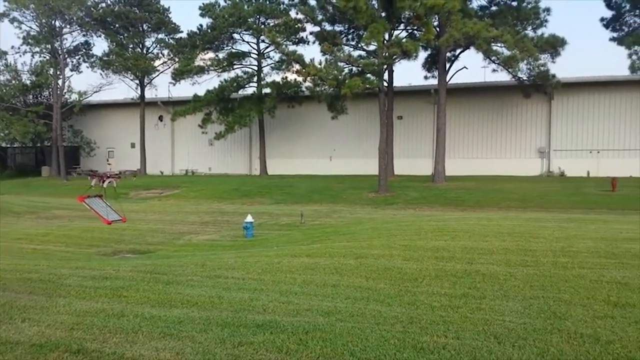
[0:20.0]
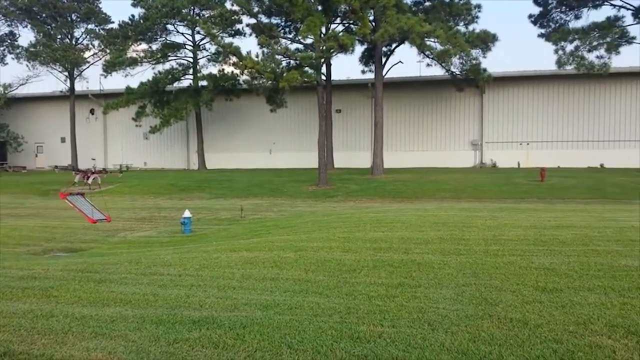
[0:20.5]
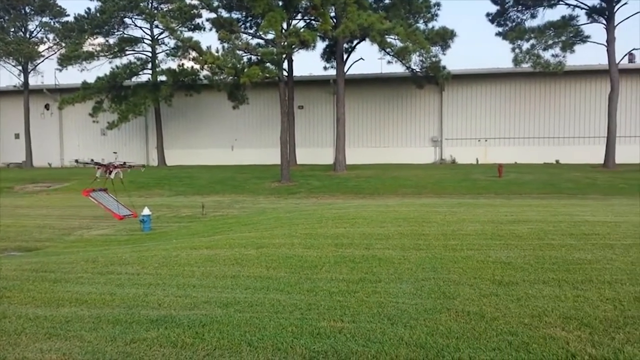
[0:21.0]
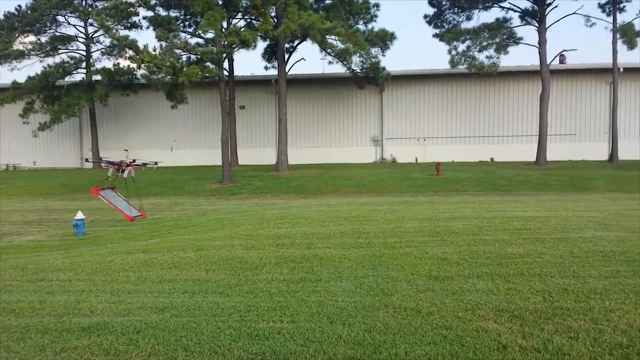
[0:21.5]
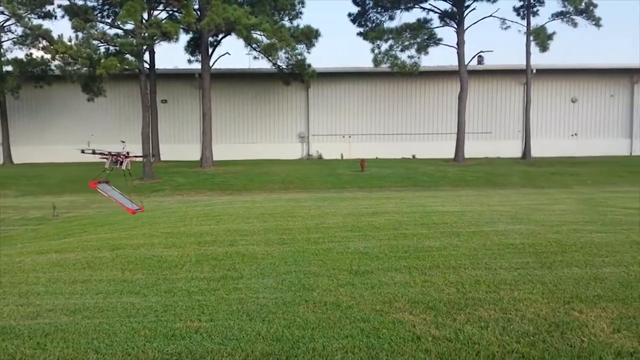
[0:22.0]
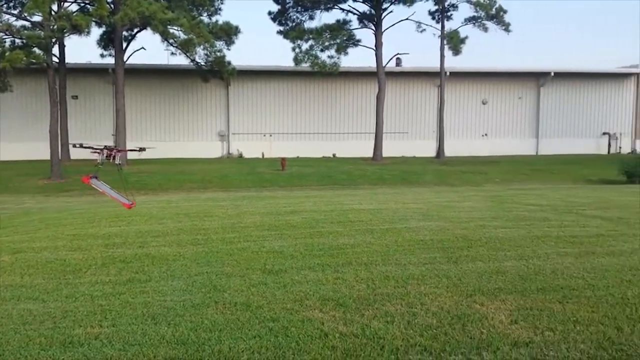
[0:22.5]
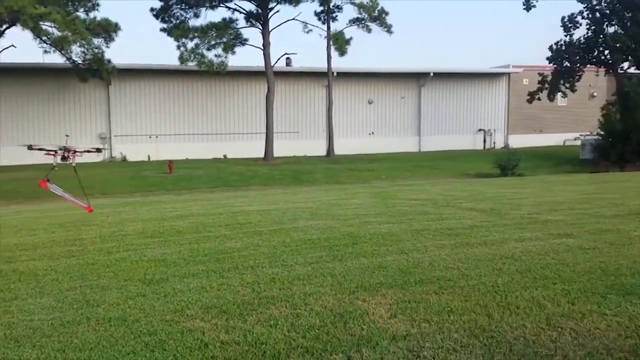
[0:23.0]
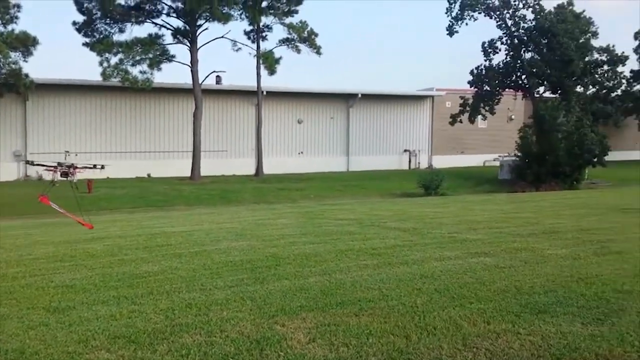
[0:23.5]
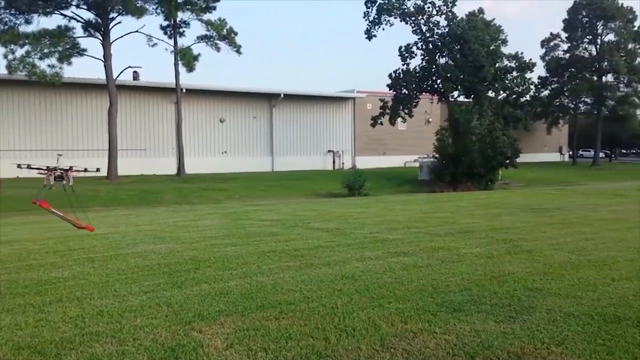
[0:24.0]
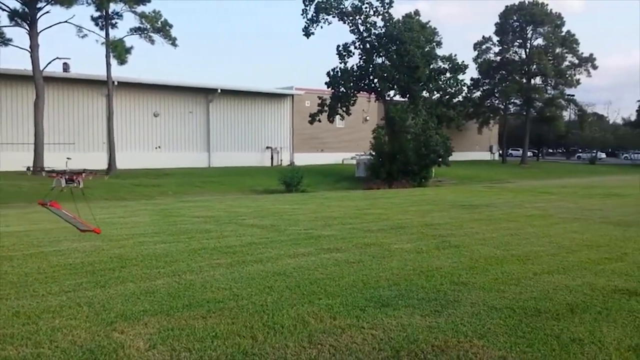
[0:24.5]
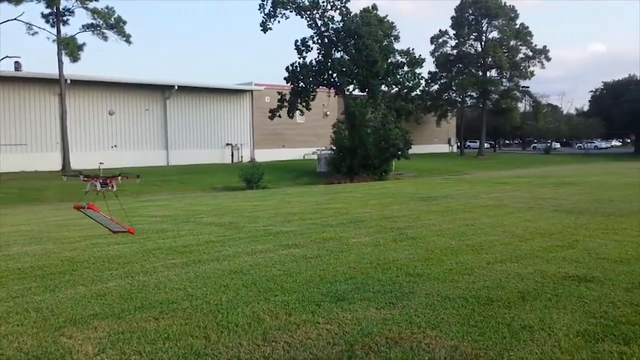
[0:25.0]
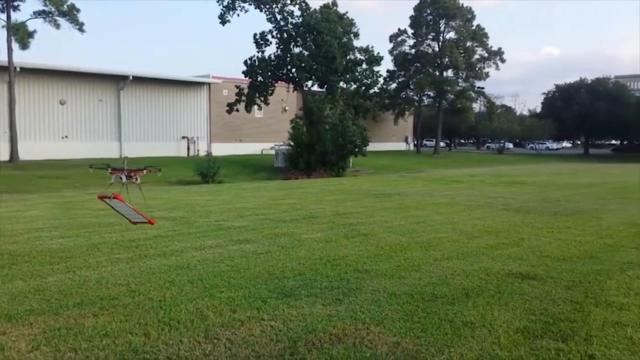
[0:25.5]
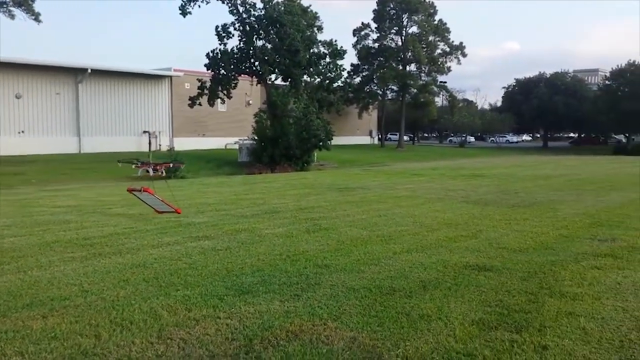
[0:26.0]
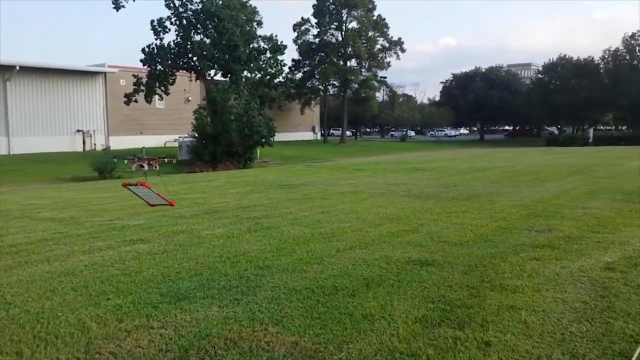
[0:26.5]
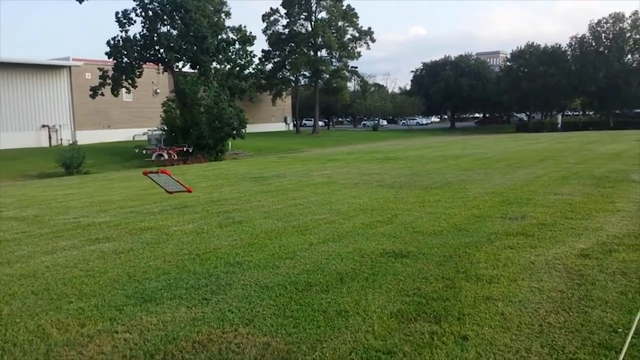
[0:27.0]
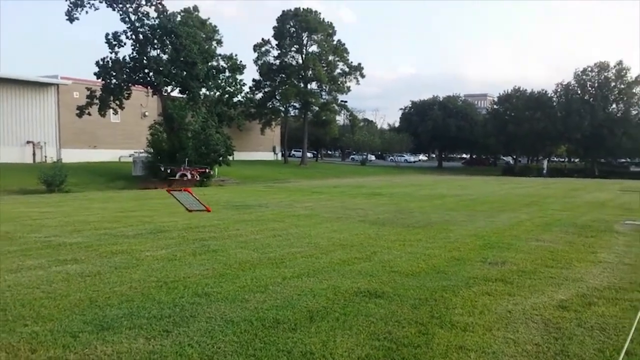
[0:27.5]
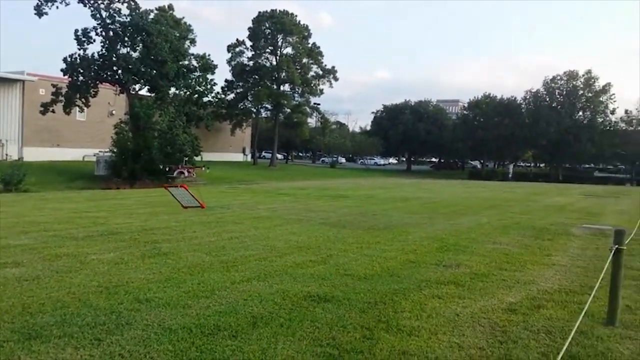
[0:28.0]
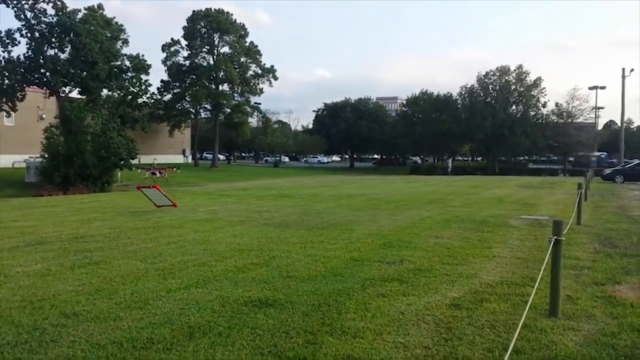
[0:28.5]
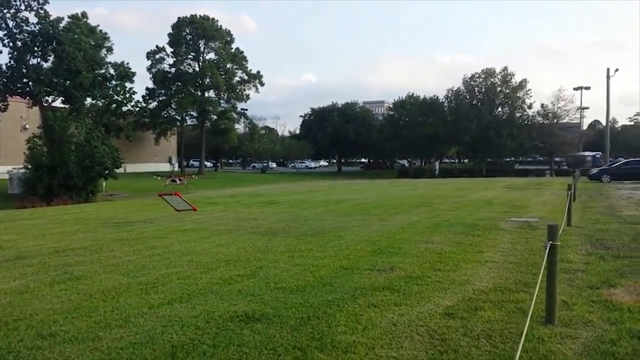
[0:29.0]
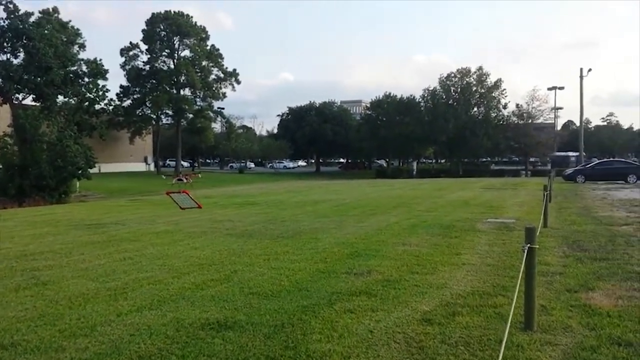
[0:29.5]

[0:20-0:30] What appears to be a drone flies from the left side toward the right, passes a blue fire hydrant, and keeps going. The setting looks like a parking lot and a field, apparently on a campus. Only the drone is visible, carrying something that looks like a small screen, like the kind put up on a patio door to keep bugs out, though exactly what it is remains unclear.